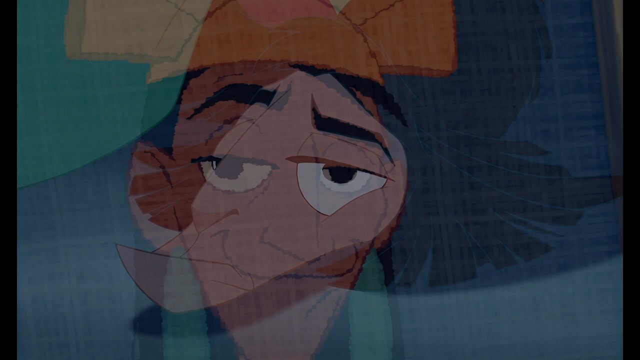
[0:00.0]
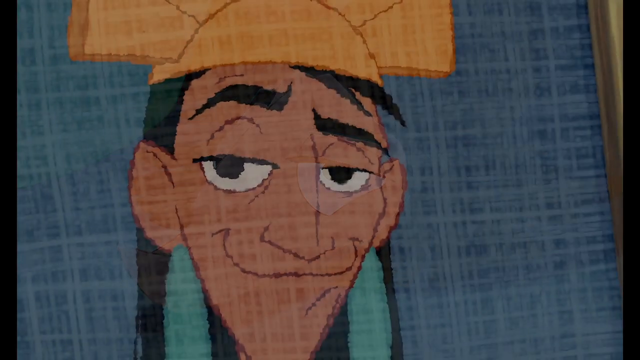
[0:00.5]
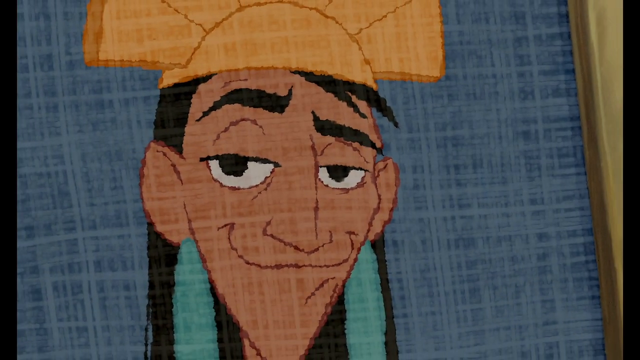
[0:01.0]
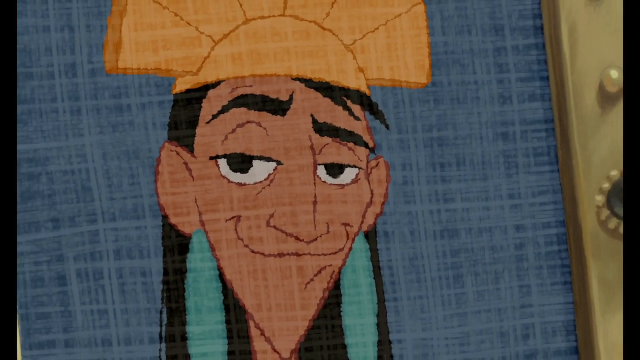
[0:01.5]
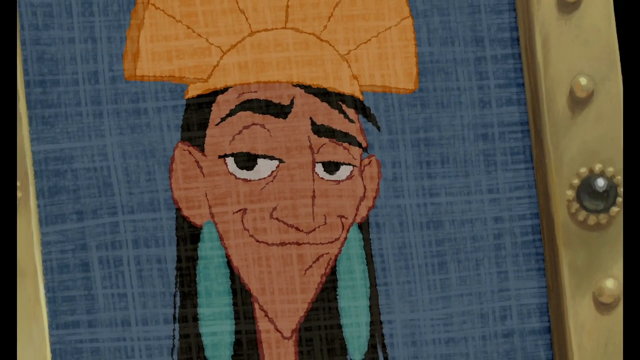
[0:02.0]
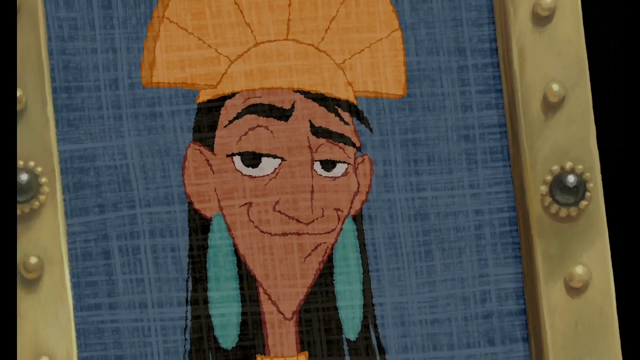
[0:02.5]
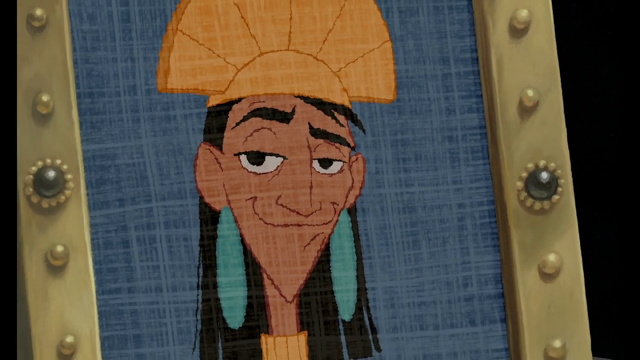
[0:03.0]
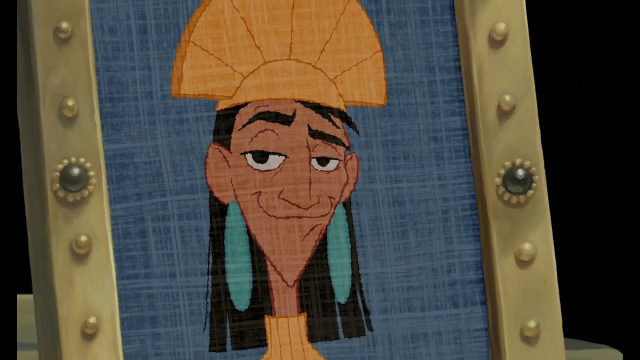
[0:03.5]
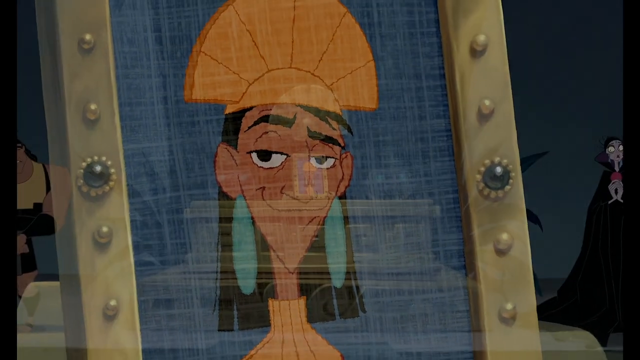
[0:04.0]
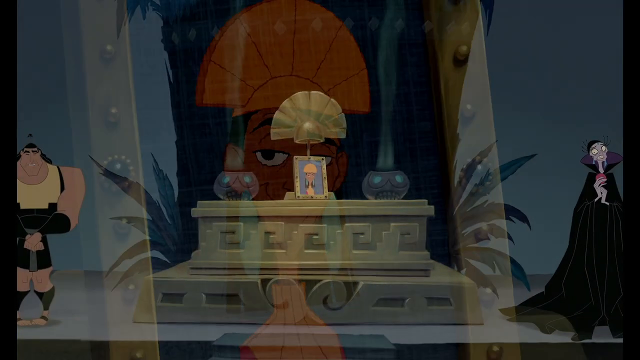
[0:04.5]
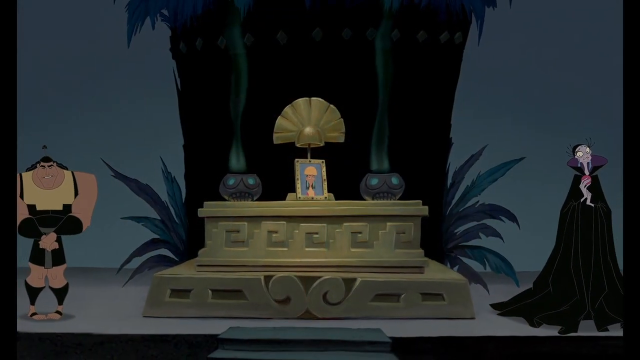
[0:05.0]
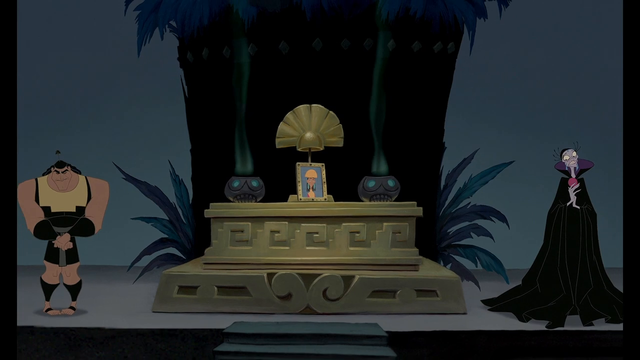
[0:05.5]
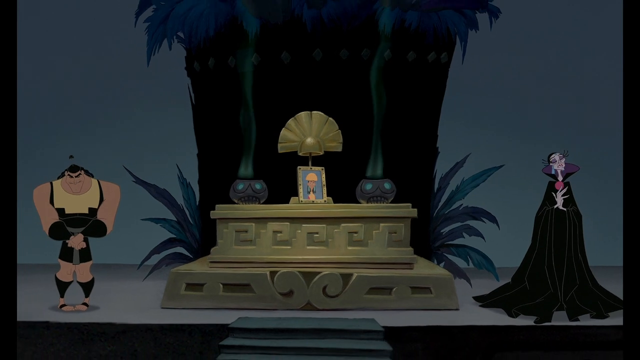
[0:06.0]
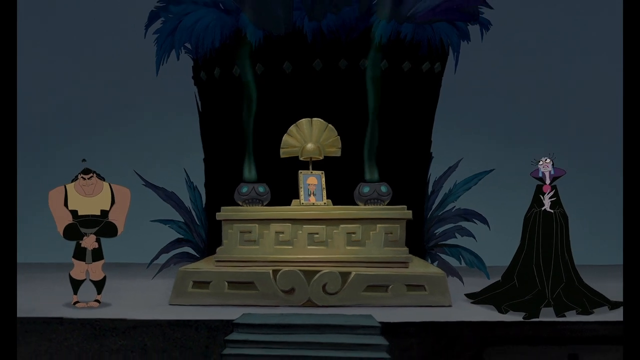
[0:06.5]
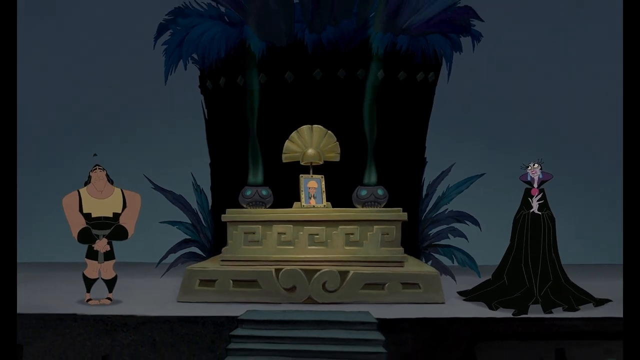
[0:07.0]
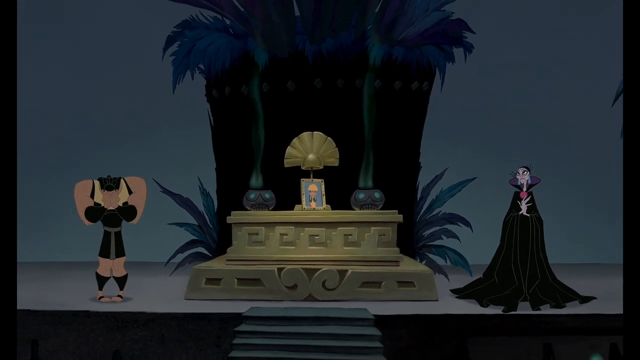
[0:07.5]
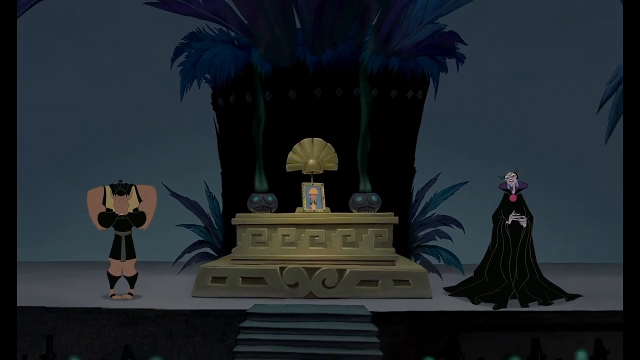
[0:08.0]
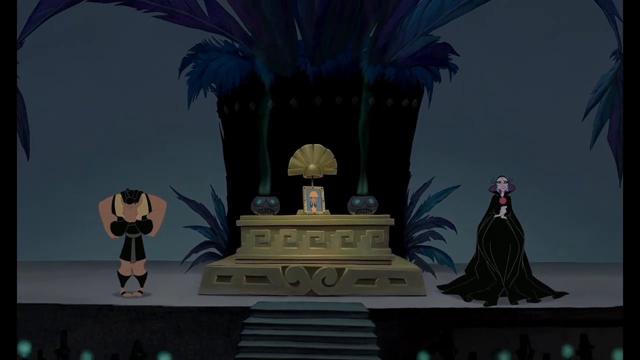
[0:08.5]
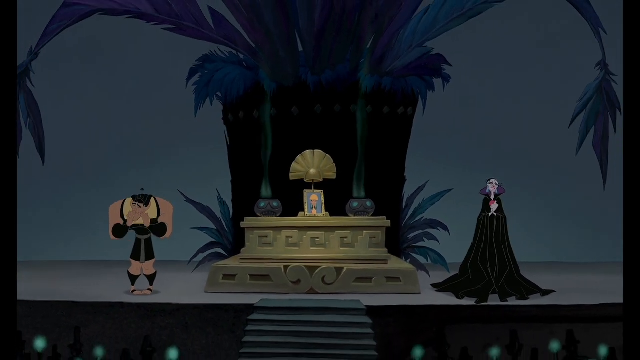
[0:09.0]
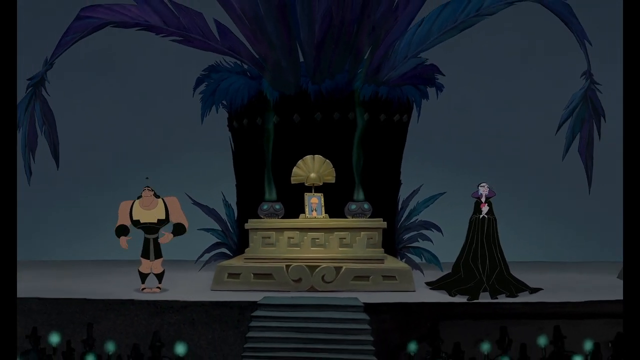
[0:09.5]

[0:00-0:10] The video opens on an animated man, with the view seeming to zoom in on him. He appears to be of Indian or Egyptian descent. He has long hair, a long neck, long earrings, and a crown on his head that resembles a sun. The scene then splits and shows two other people. One is a woman wearing a long black robe; the other, on the left, is a stout-looking man with a large frame and black hair, bracers on his arms and armor on his shins. In the center is a coffin with the same crown the man was wearing, suggesting that he may have passed on and that this is his memorial.